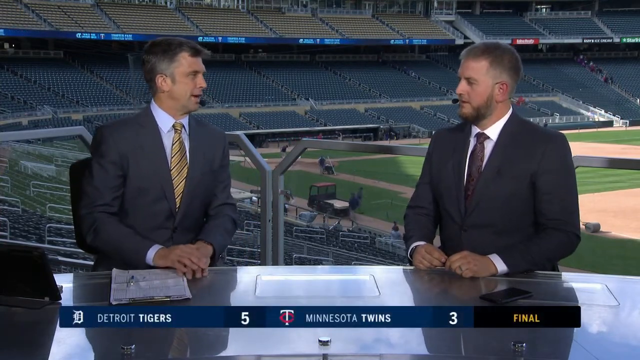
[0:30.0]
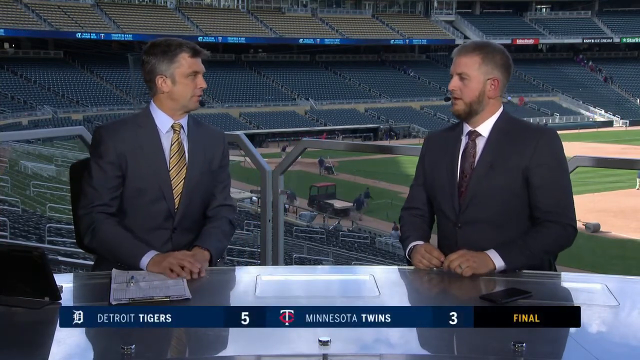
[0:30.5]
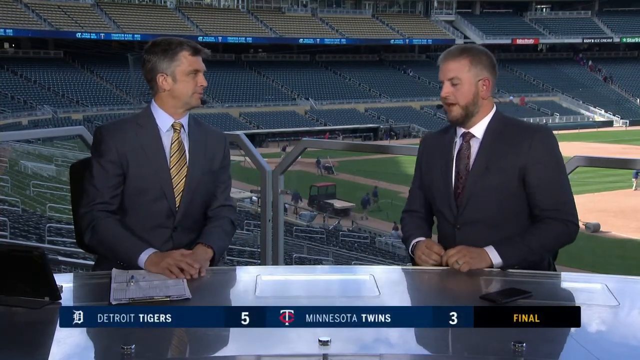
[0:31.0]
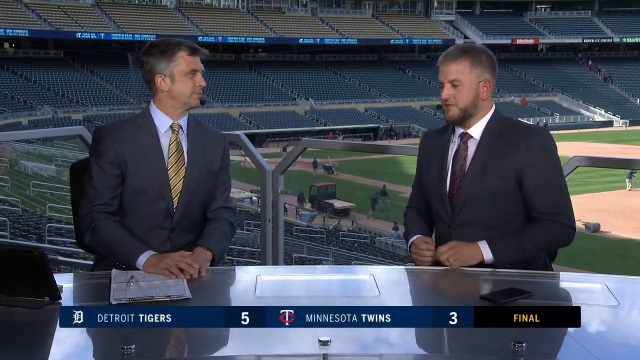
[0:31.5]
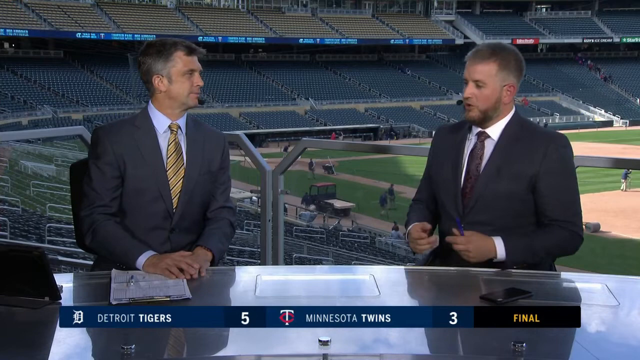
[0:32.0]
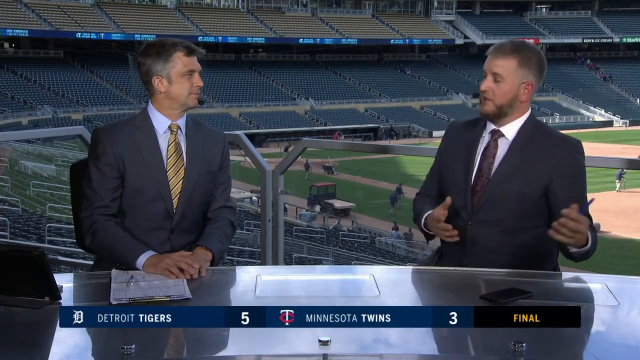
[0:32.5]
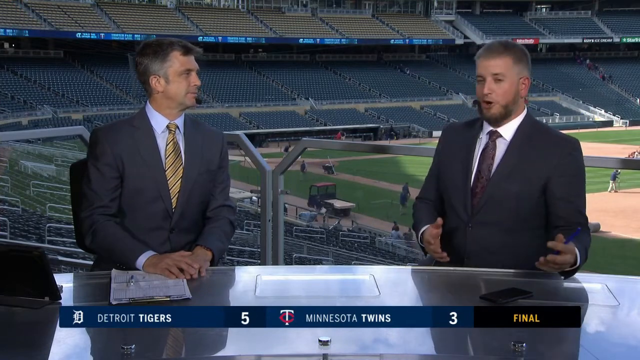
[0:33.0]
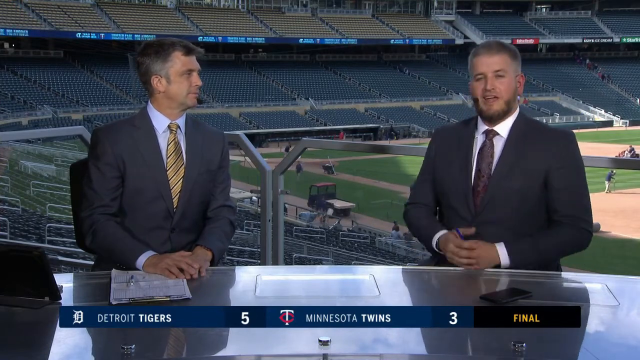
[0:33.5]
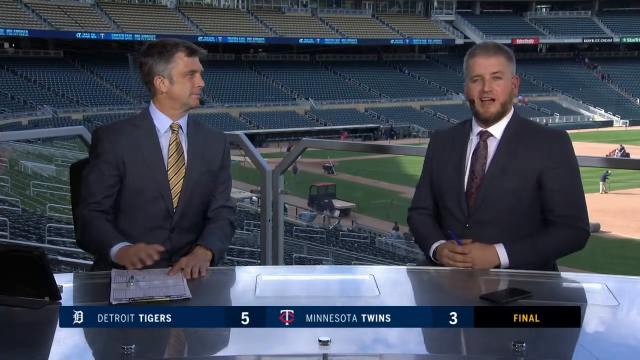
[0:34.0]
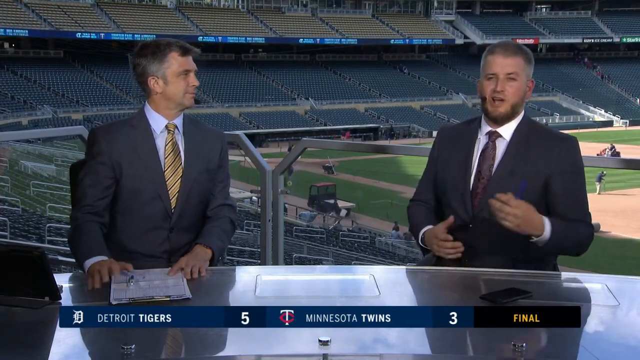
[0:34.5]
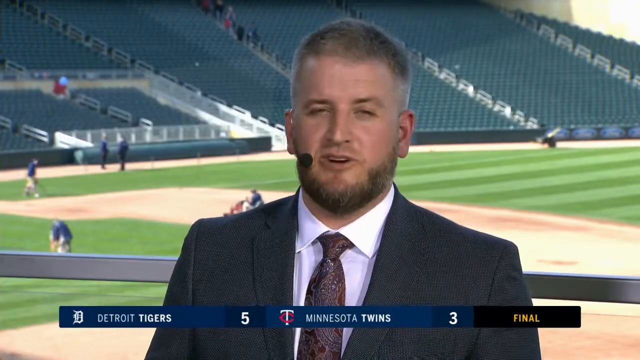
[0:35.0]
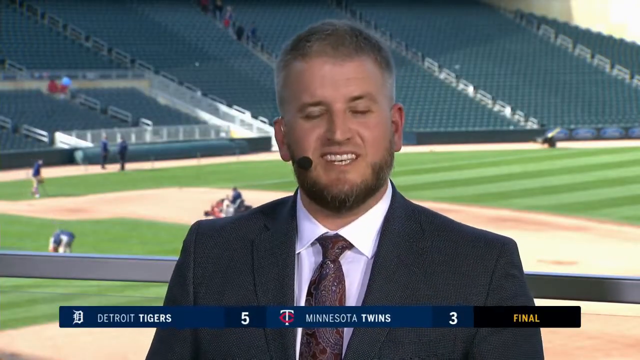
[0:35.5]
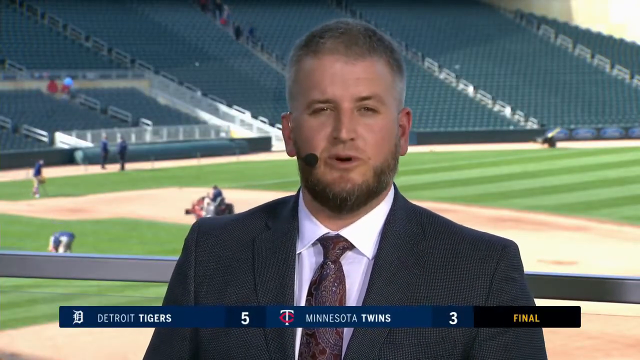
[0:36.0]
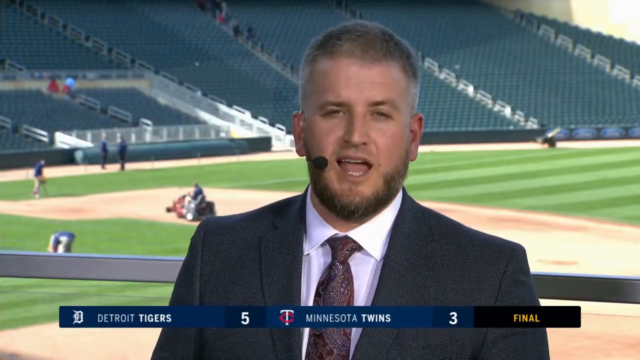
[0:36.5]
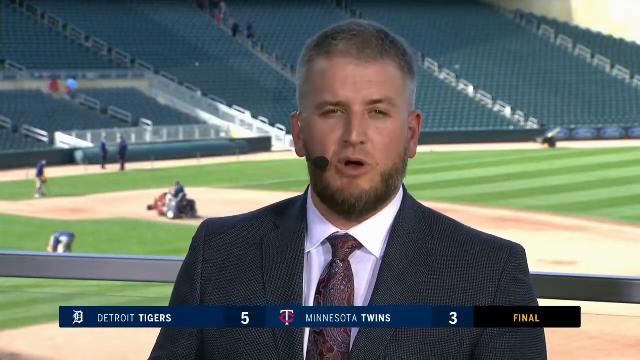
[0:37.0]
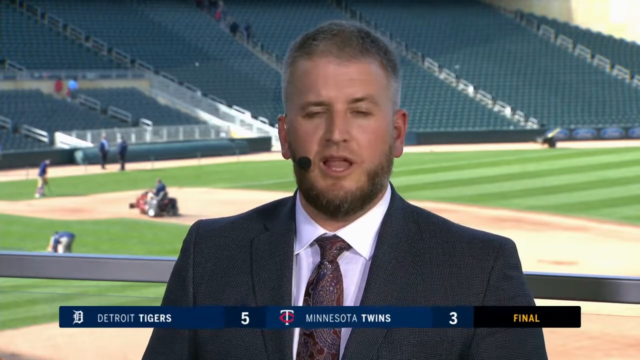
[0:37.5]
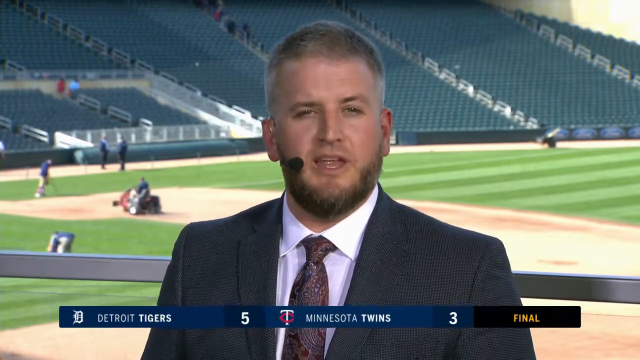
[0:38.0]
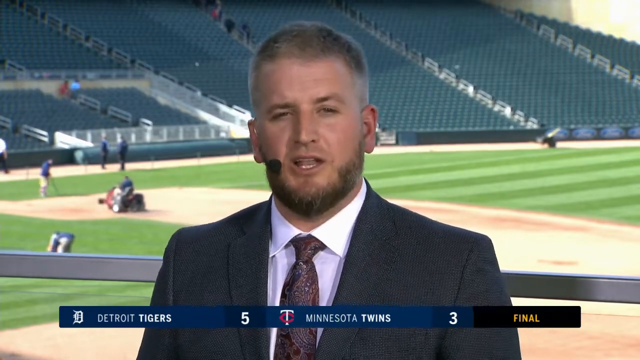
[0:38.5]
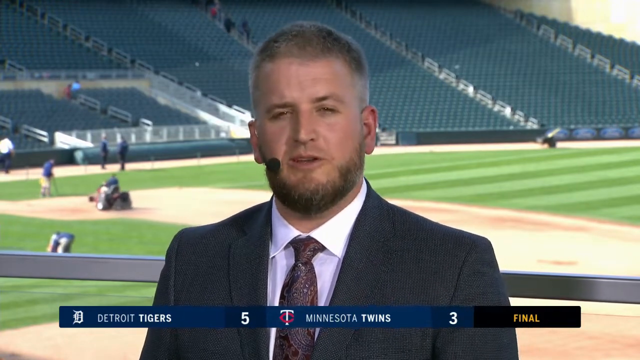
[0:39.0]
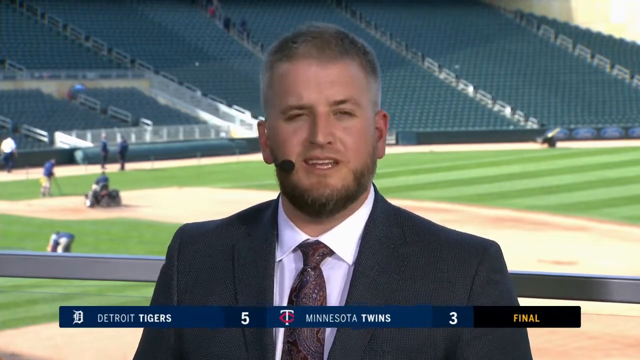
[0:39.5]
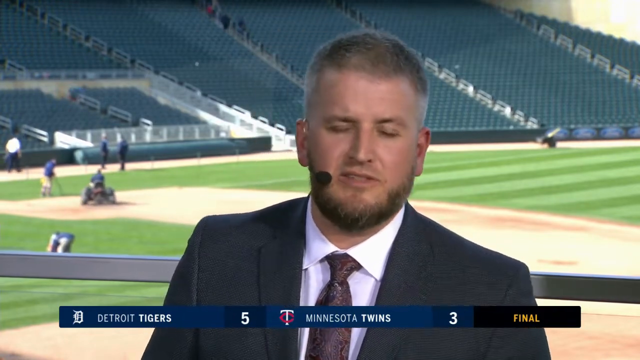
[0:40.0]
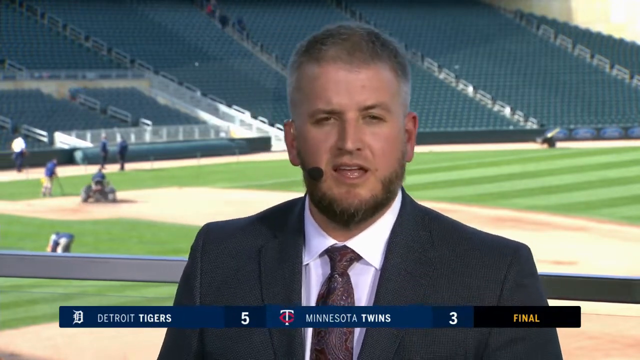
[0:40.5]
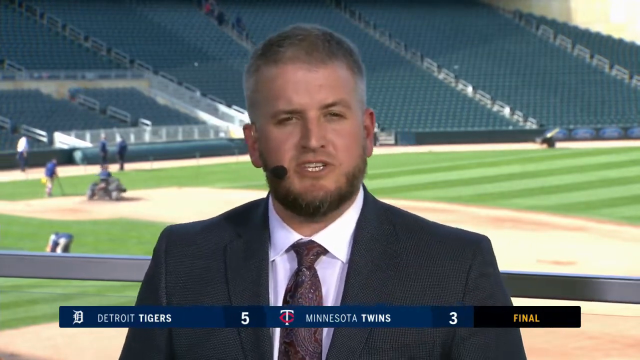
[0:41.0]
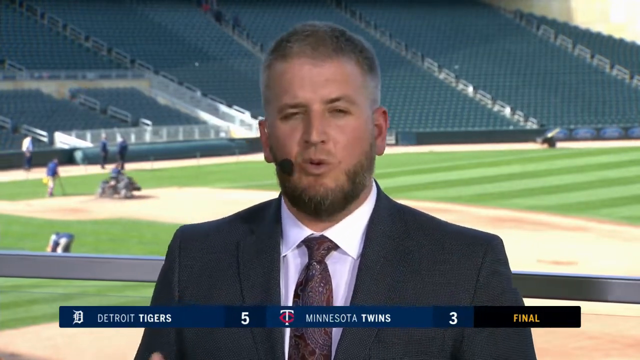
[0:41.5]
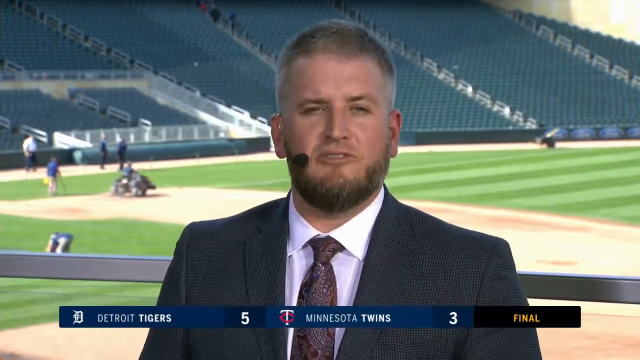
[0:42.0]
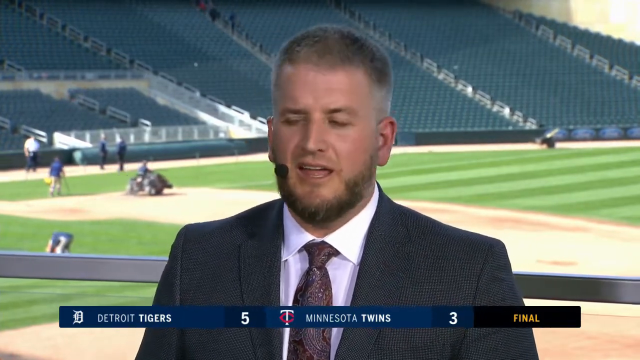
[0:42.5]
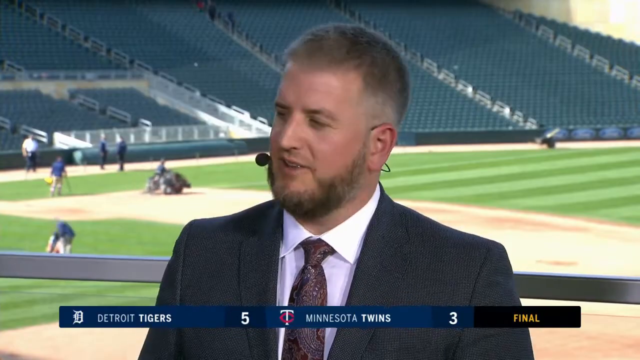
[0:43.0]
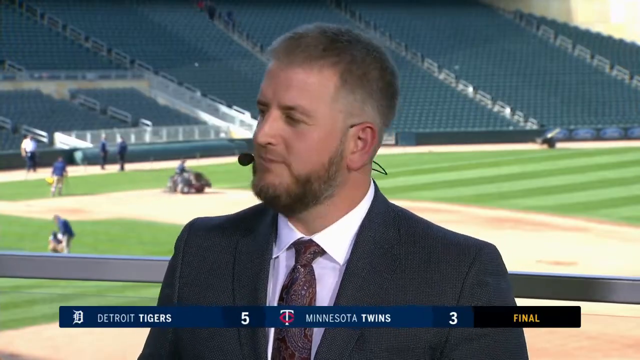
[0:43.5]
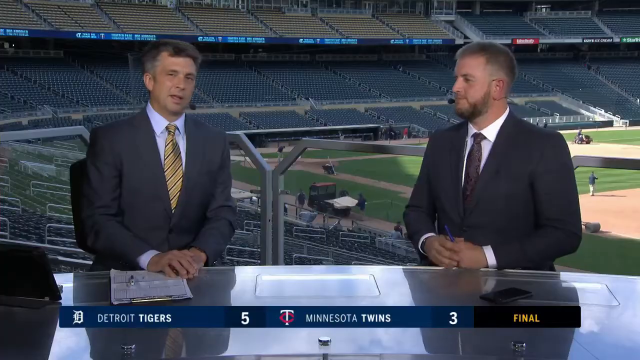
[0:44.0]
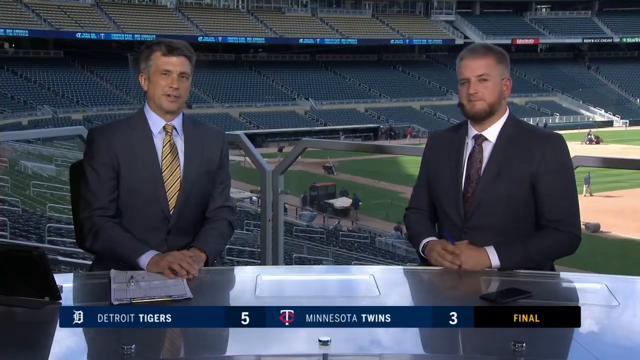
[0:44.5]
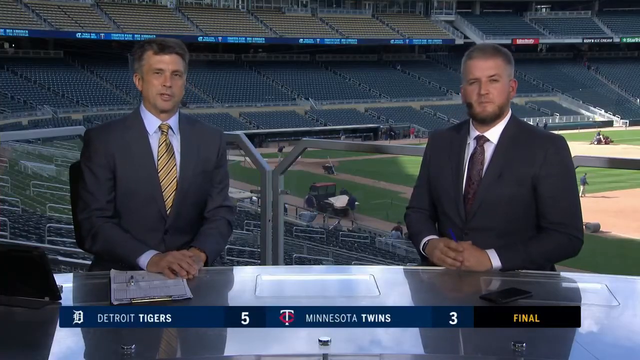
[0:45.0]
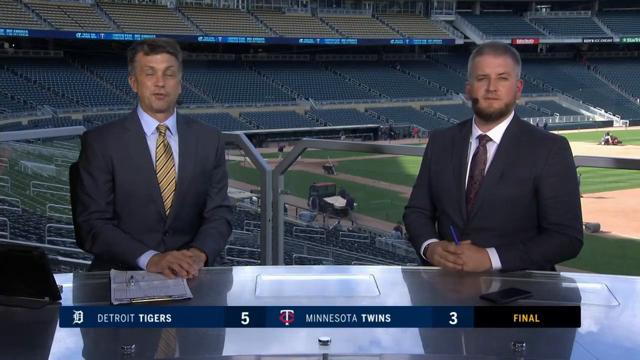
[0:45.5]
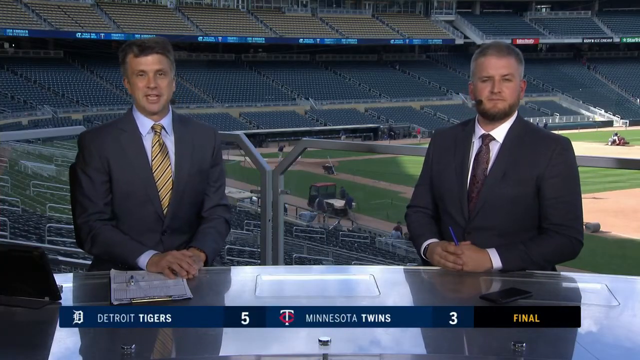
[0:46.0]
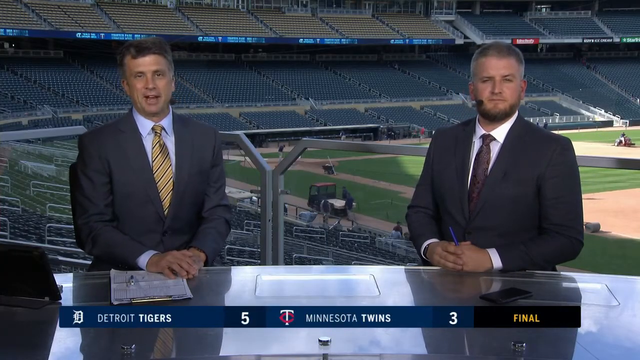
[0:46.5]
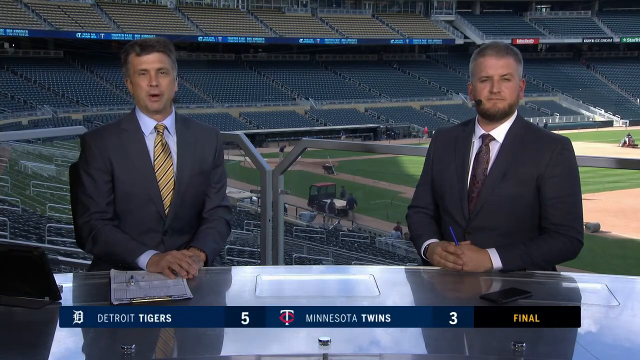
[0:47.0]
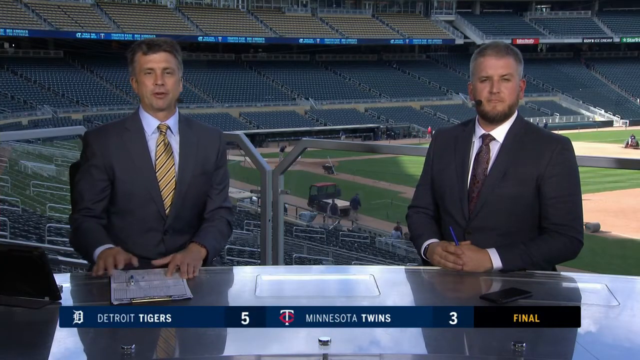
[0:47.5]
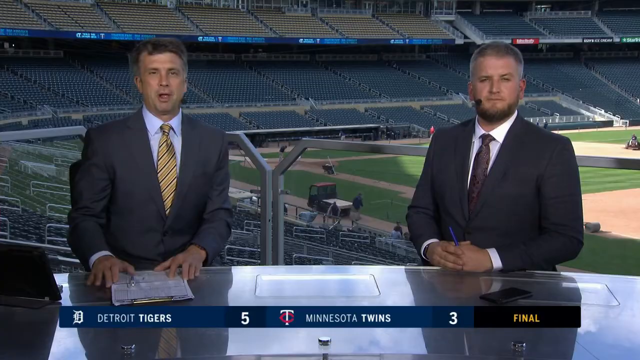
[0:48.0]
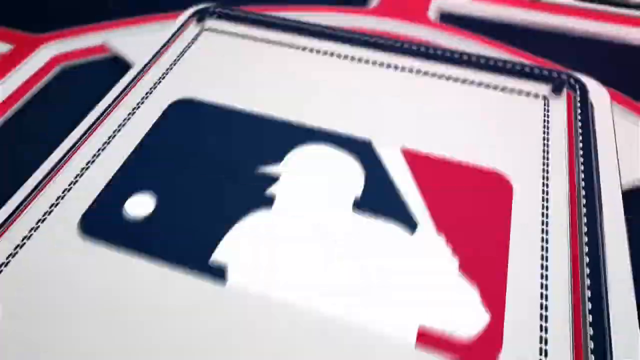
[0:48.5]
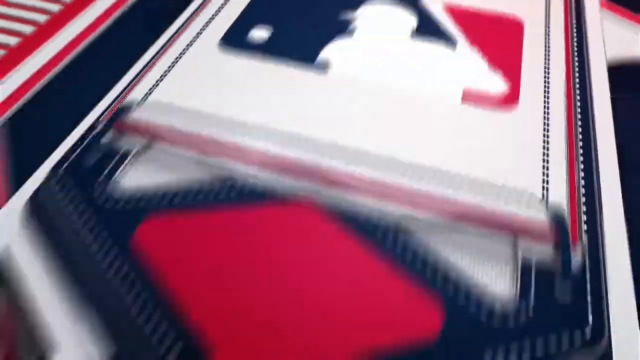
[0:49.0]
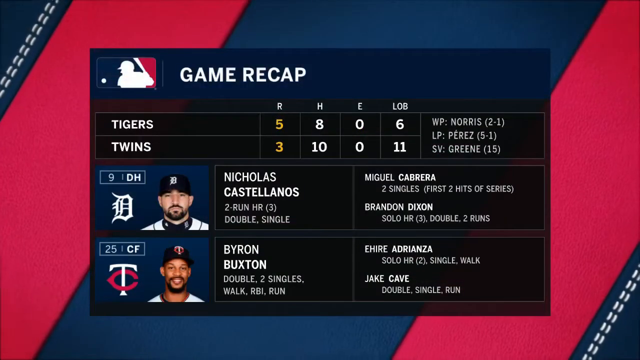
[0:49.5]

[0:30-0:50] Two sportscasters sit apparently in the press booth at the Minnesota stadium after a game, while the grounds crew cleans up on the field behind them. They sit in front of a metallic table; the man on the right has a phone in front of him, and the man on the left has a scorecard and a pen. They look at each other, and the camera alternately shows the man on the right, who is about 35, with a beard but no mustache, a charcoal gray suit, a dark red tie, a white shirt, sandy hair, and a microphone just to the viewer's left near his mouth. He speaks to the camera for a while as the grounds crew works behind his right shoulder. The view then backs up to show both sportscasters, who talk for a while before a game recap appears.